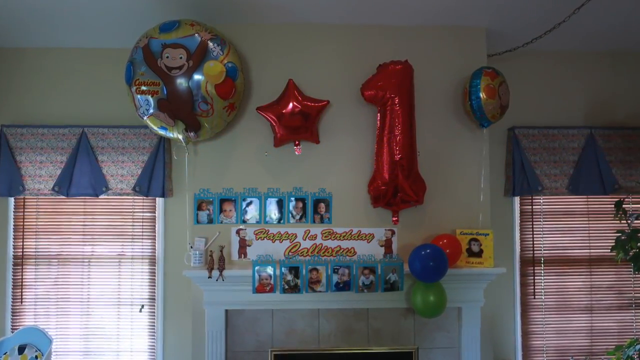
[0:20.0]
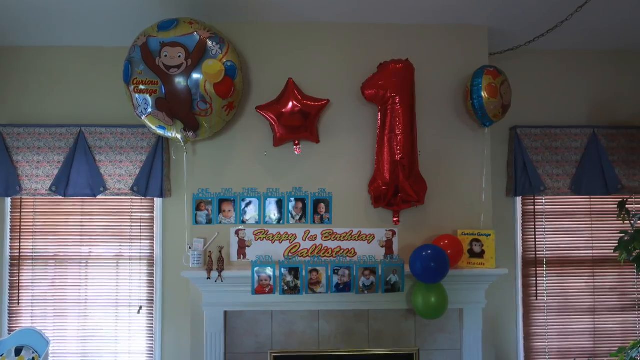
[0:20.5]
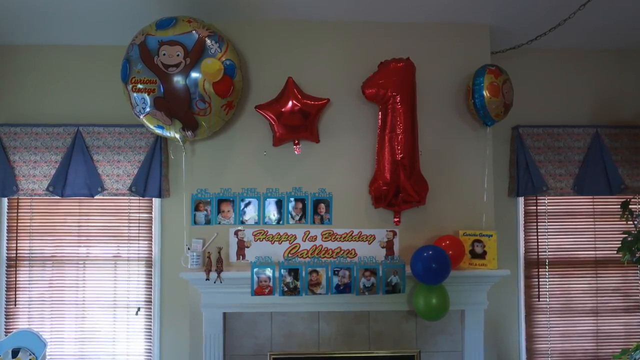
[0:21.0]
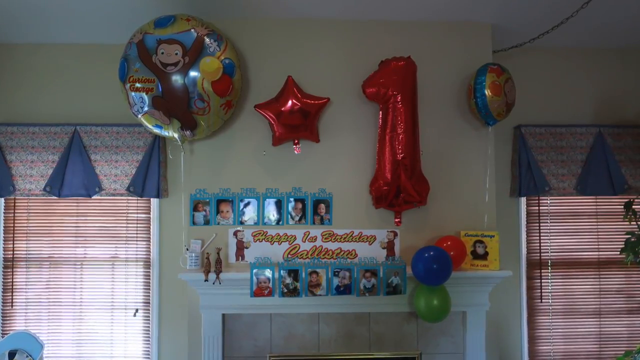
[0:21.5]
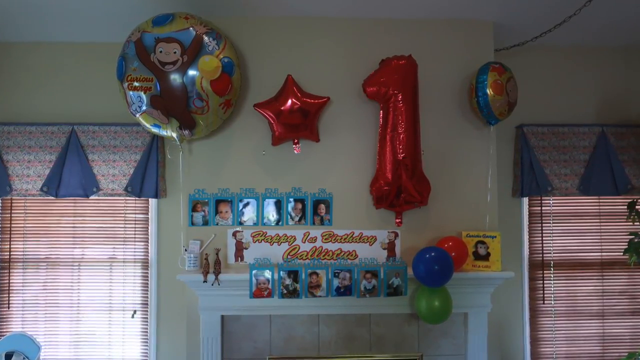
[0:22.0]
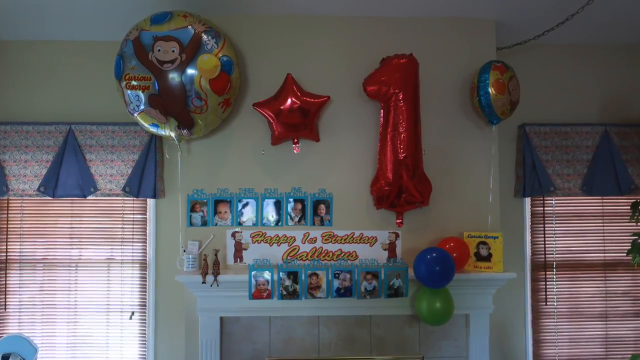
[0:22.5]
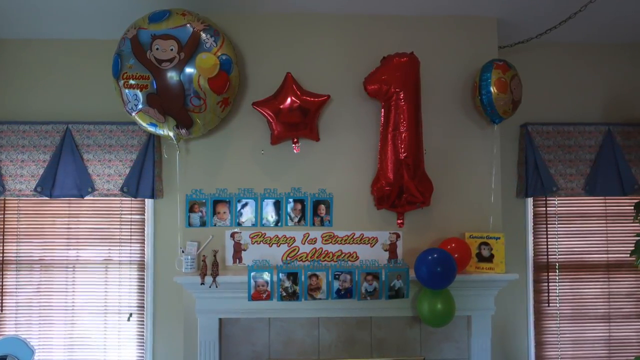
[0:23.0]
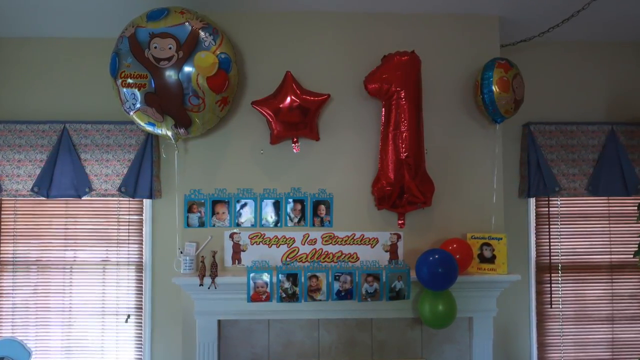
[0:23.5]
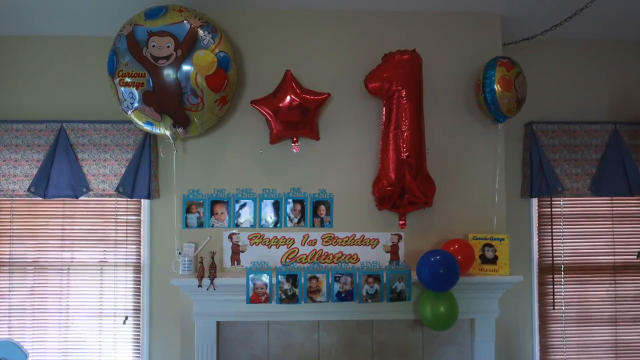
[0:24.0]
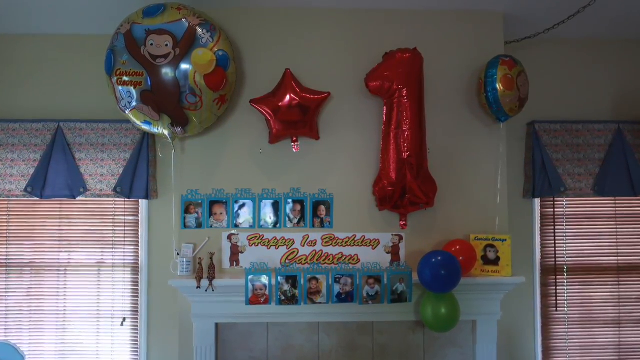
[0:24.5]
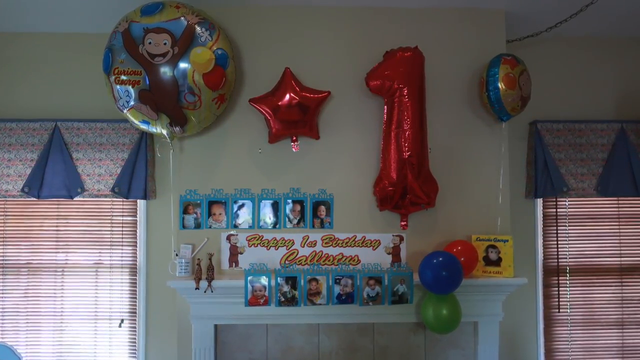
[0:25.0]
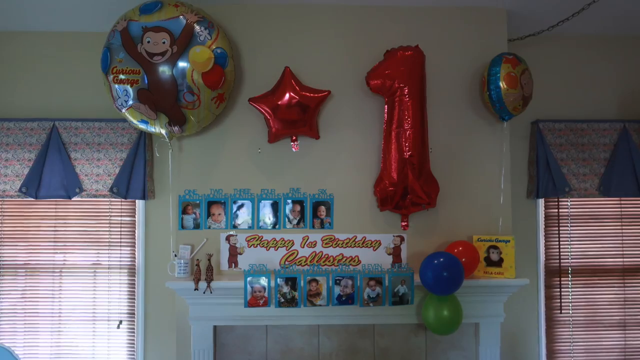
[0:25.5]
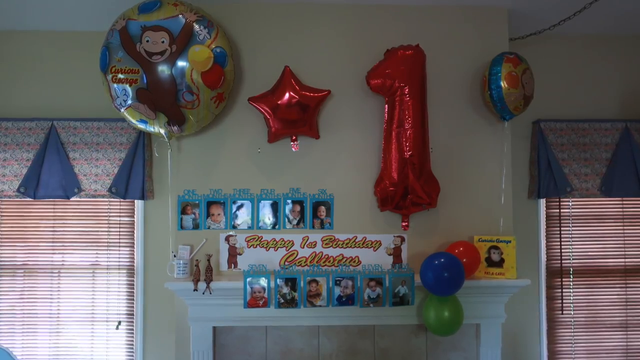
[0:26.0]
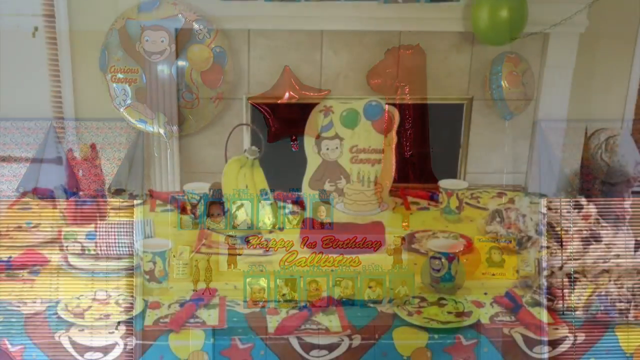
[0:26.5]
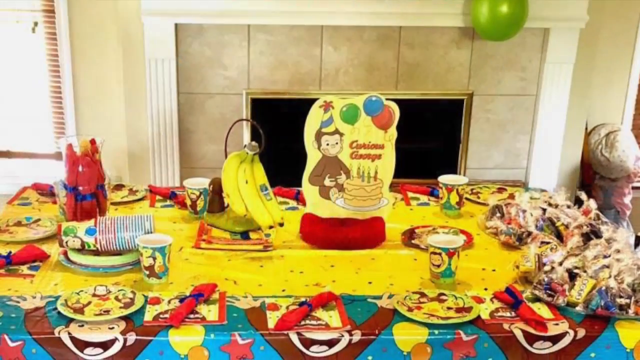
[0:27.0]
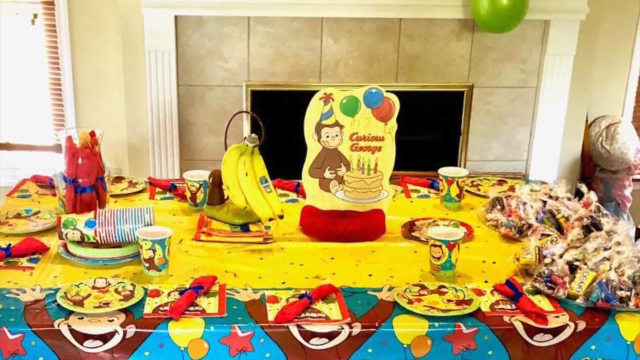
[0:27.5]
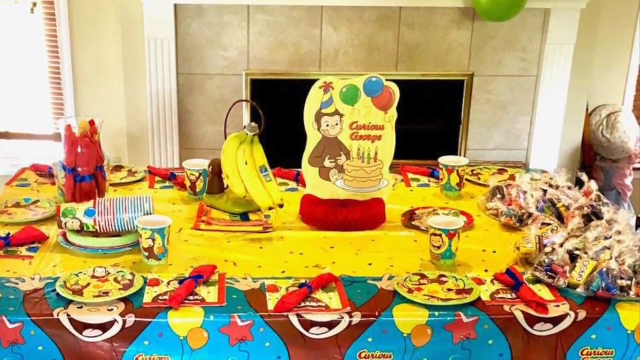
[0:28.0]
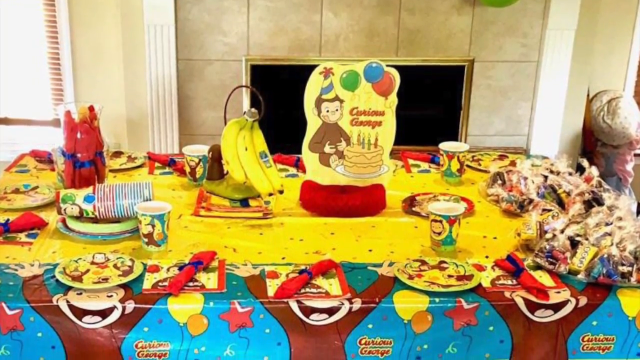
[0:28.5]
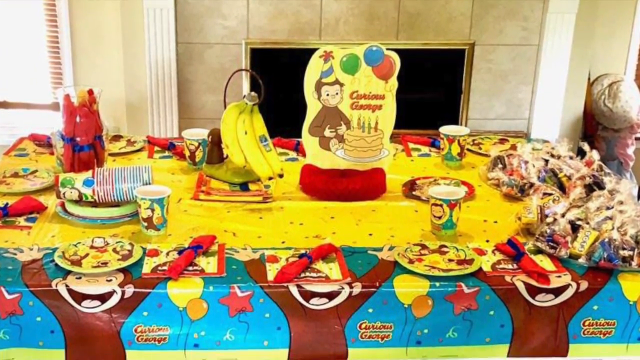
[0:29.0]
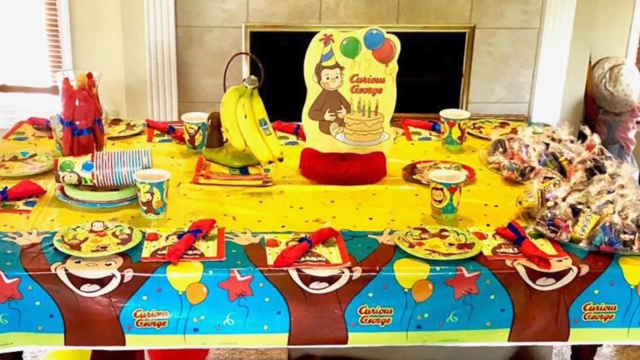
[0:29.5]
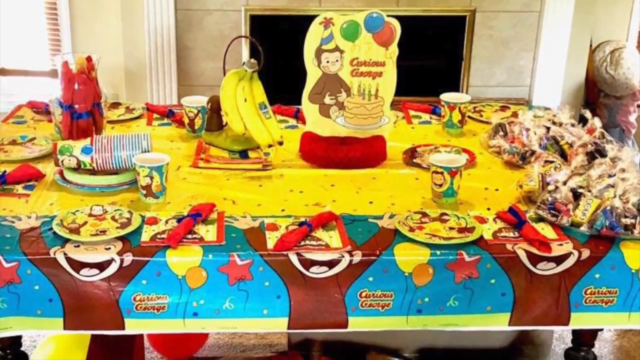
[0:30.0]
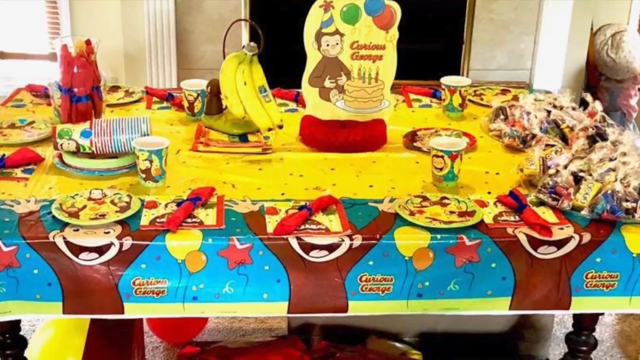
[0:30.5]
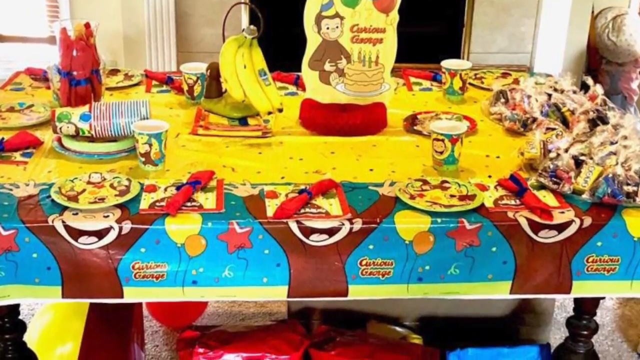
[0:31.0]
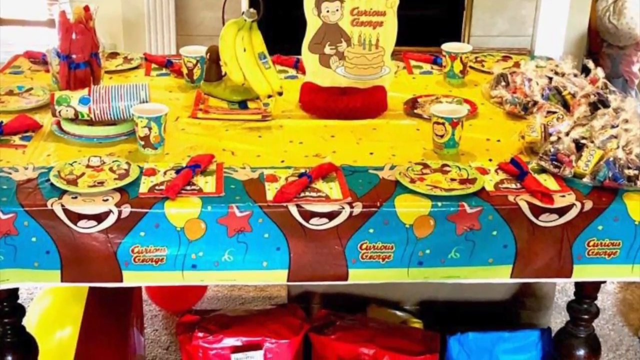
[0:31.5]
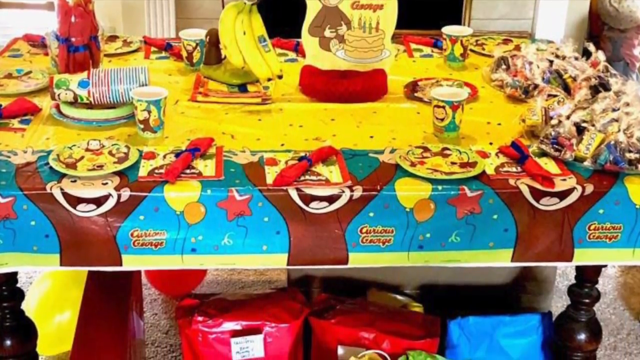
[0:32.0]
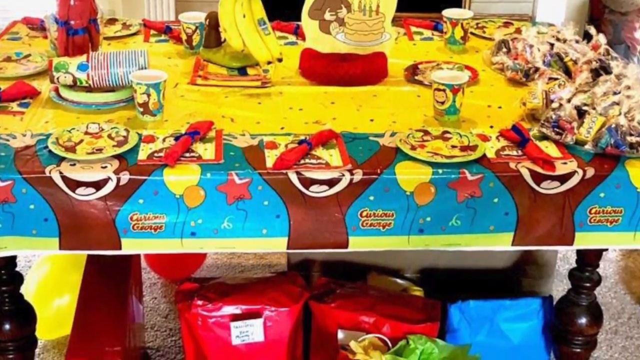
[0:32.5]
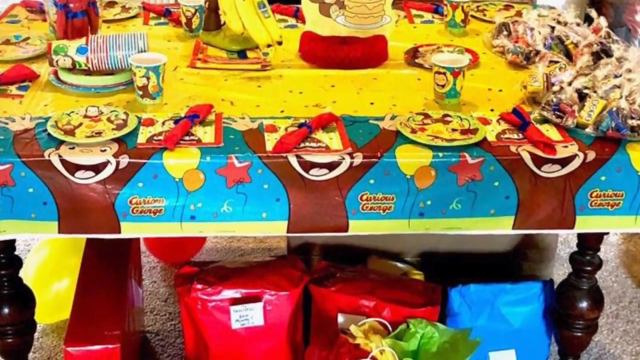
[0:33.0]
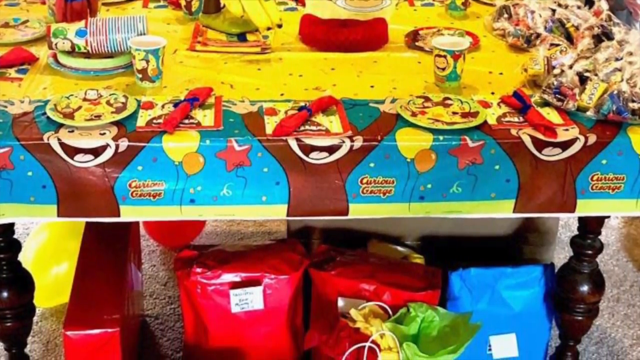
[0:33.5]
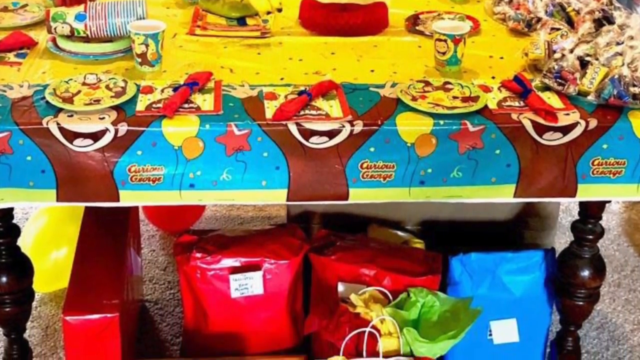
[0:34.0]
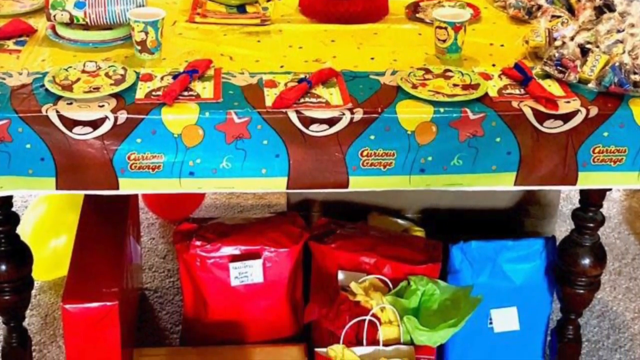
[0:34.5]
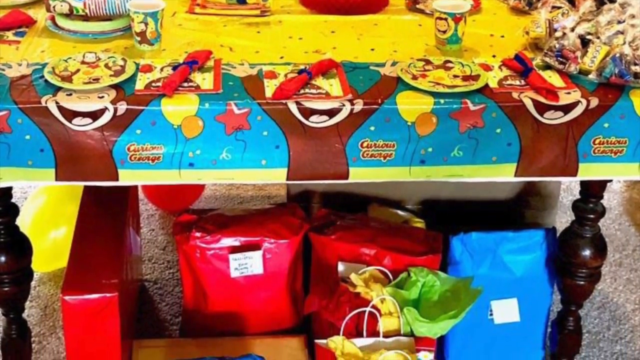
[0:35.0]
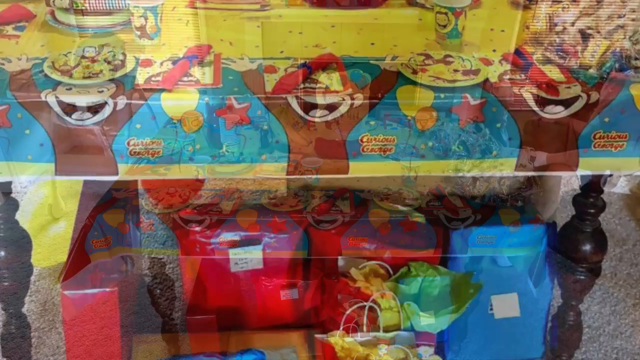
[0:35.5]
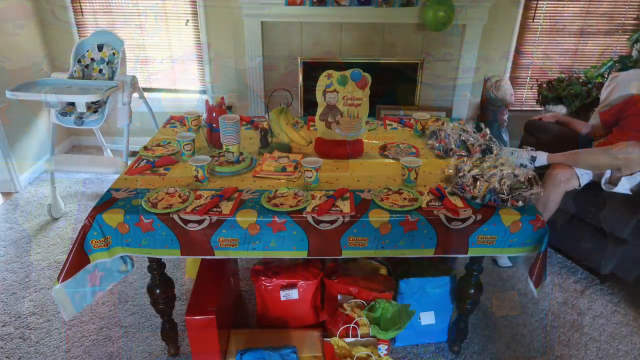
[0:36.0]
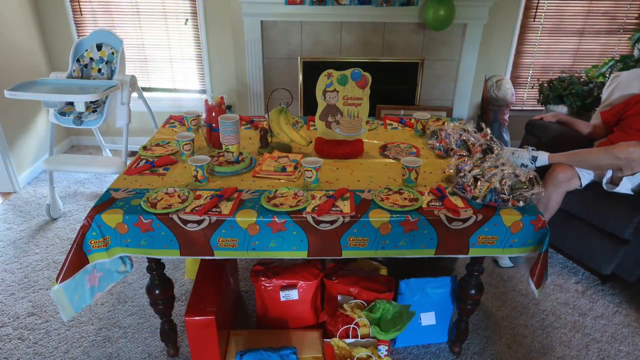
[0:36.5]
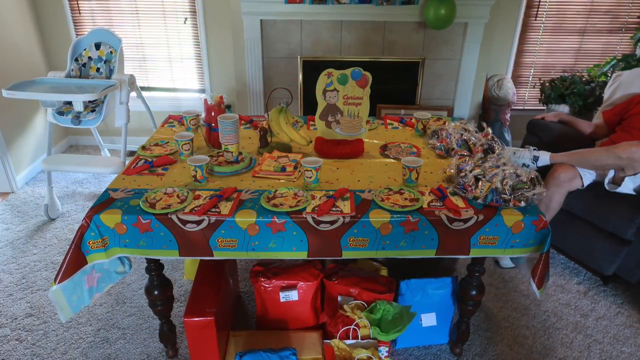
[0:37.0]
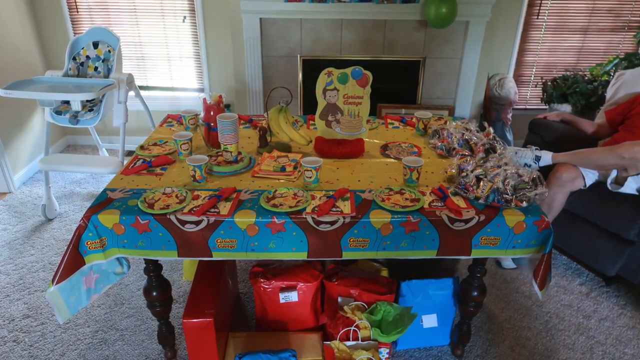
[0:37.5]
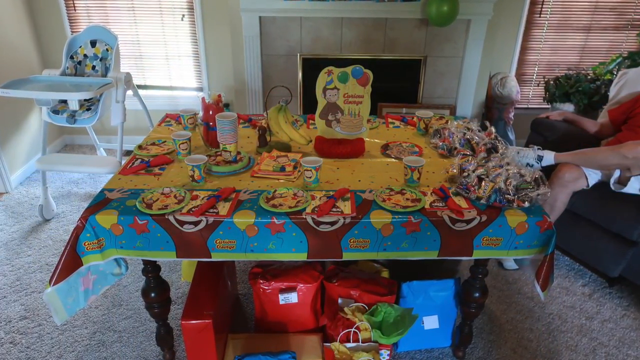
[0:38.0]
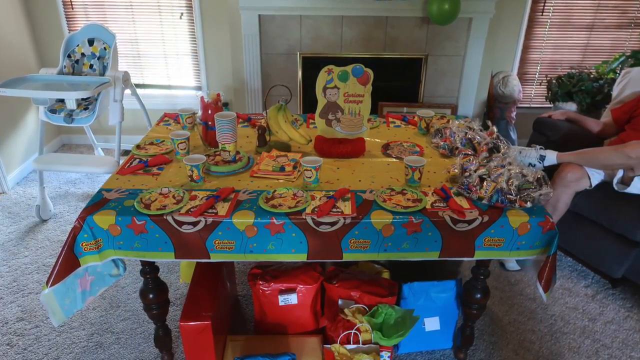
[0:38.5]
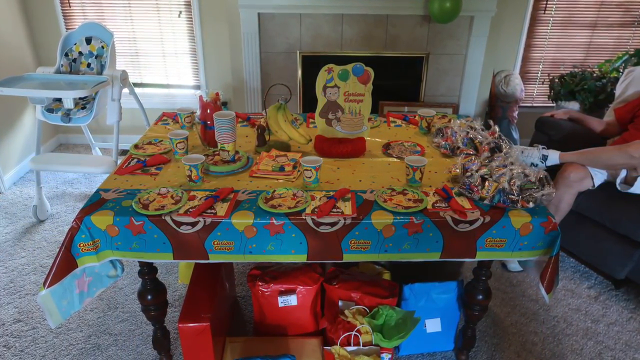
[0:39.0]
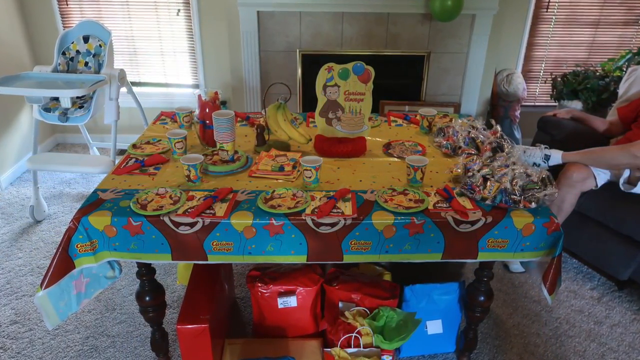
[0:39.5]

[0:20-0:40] The video shows a still photo of a birthday celebration for a one-year-old. Decorations are above a fireplace, with about four sizable balloons on either side of it. Two of the balloons look to be Curious George themed; one is a red star, and the other is a big red one for the boy's first birthday. Three smaller balloons are on the right side of the mantle. Above the mantle is a banner that says "Happy First Birthday Callistos". Six photos above the banner cover his first six months, and six more photos, taped to the front of the mantle underneath the banner, cover the next six months of the baby's life. The next shot is in front of the fireplace, where there appears to be a party table that looks to be Curious George themed. Curious George is on the tablecloth and on the paper plates and cups, a bunch of bananas is on the table, and a bunch of gifts is underneath the table.